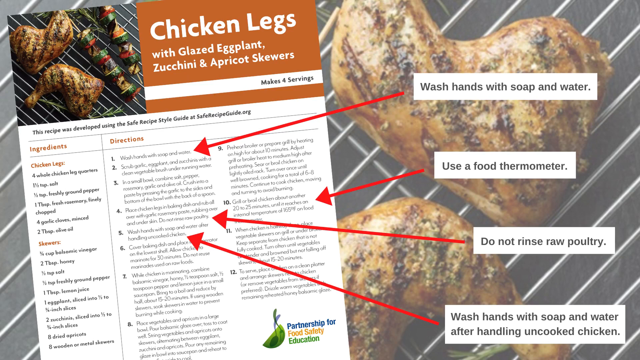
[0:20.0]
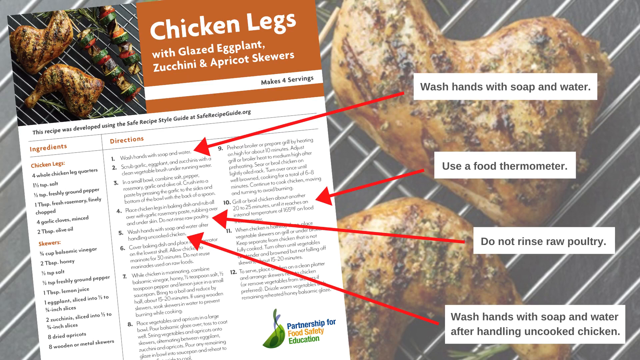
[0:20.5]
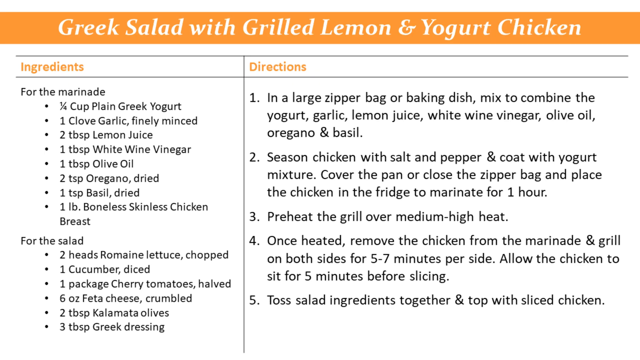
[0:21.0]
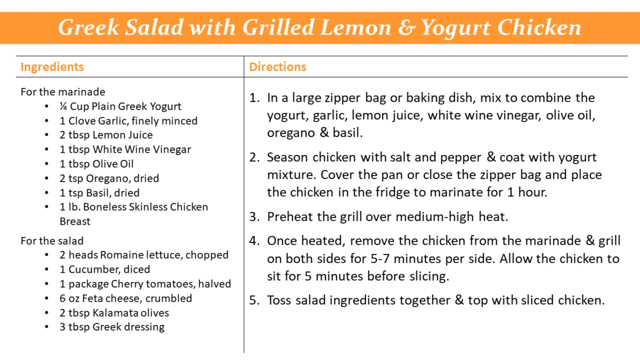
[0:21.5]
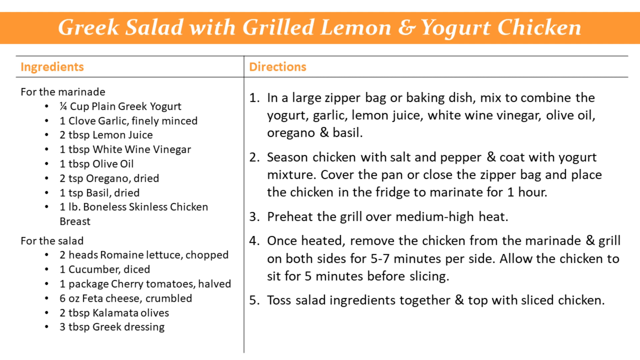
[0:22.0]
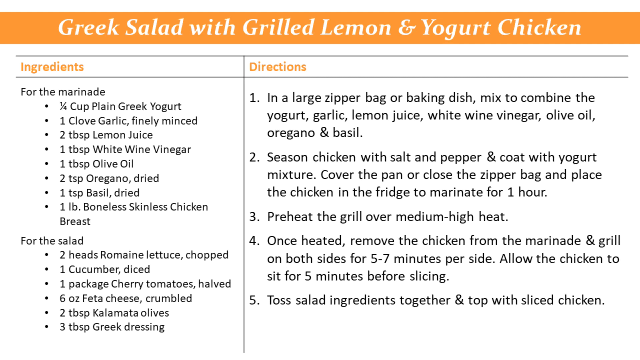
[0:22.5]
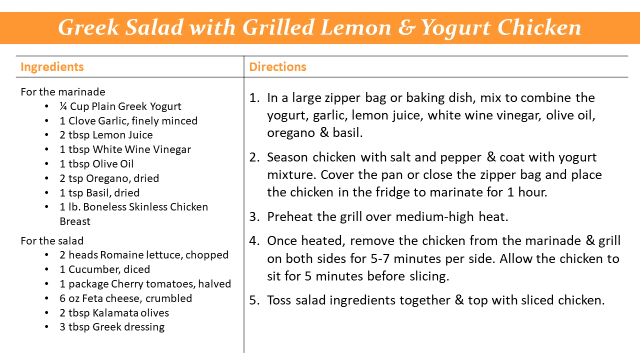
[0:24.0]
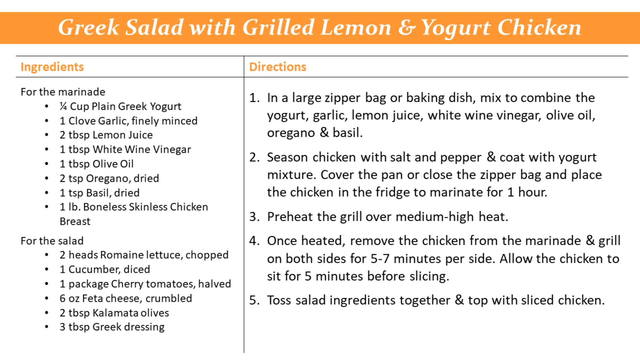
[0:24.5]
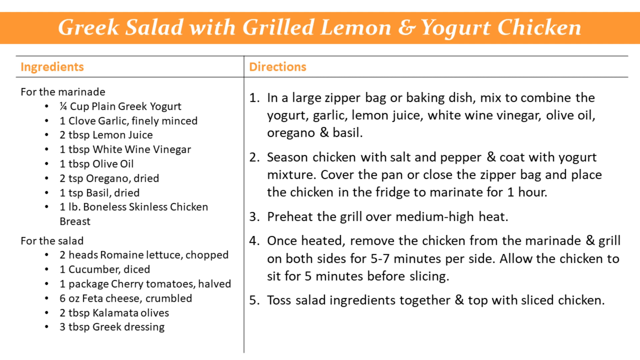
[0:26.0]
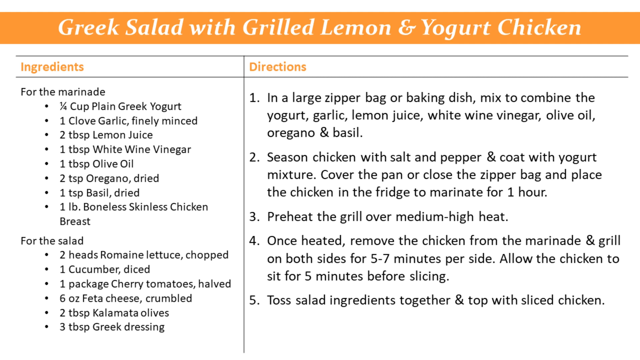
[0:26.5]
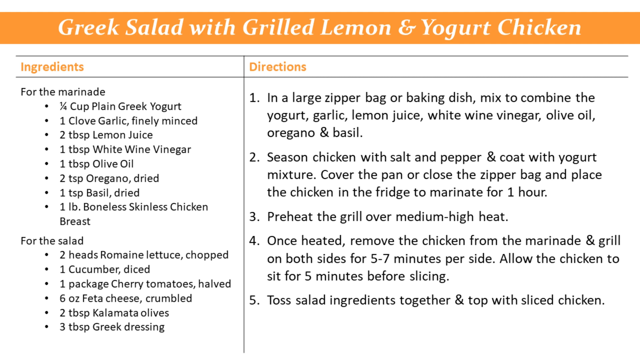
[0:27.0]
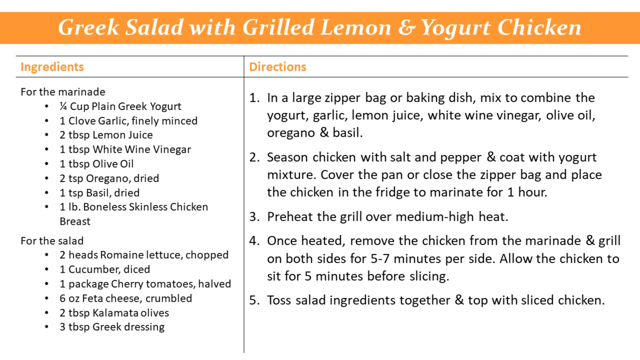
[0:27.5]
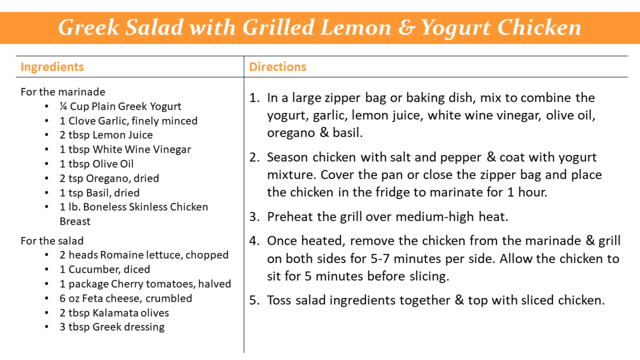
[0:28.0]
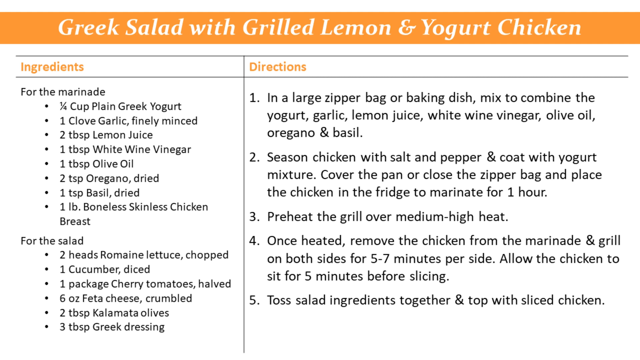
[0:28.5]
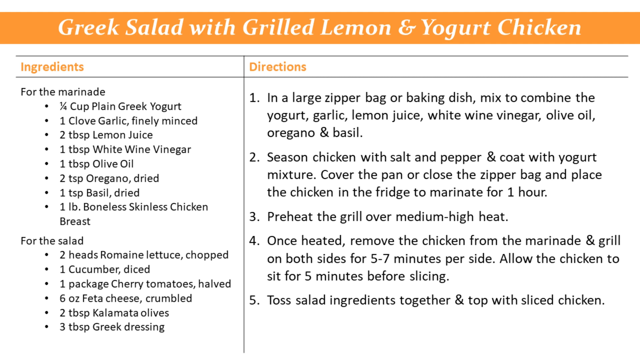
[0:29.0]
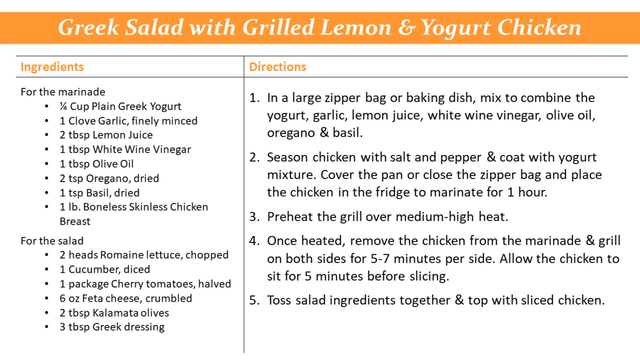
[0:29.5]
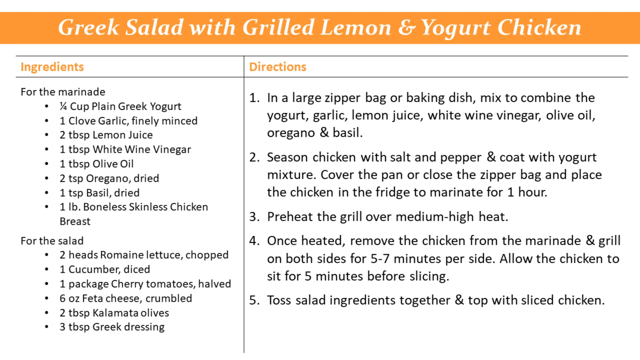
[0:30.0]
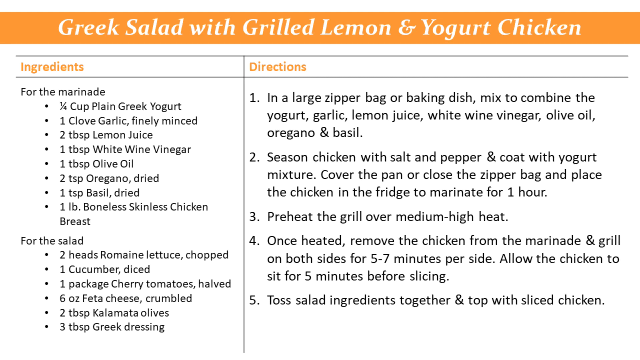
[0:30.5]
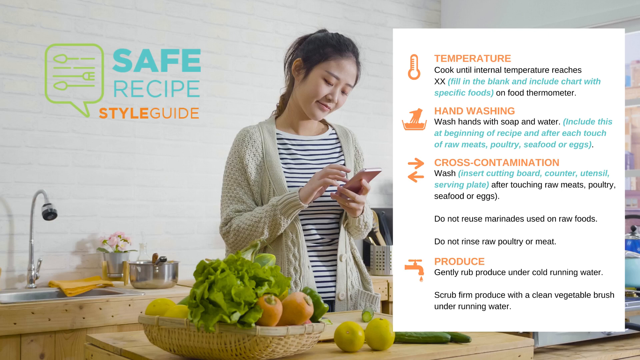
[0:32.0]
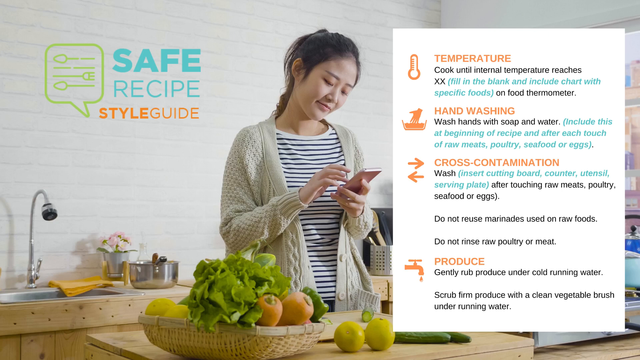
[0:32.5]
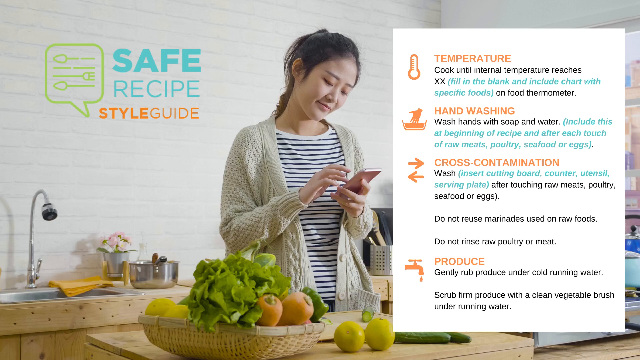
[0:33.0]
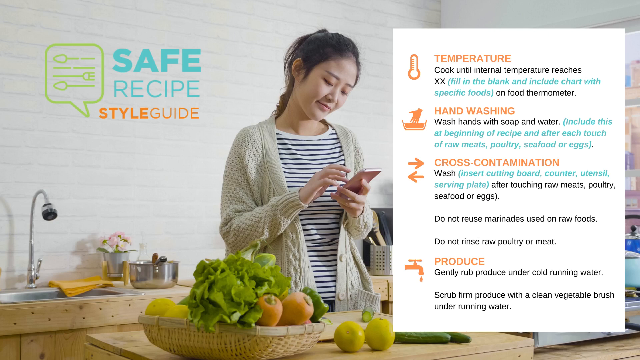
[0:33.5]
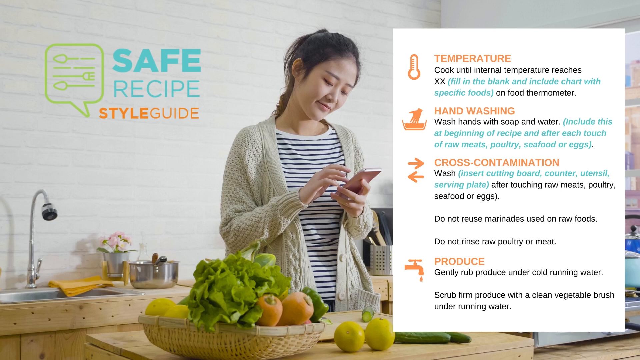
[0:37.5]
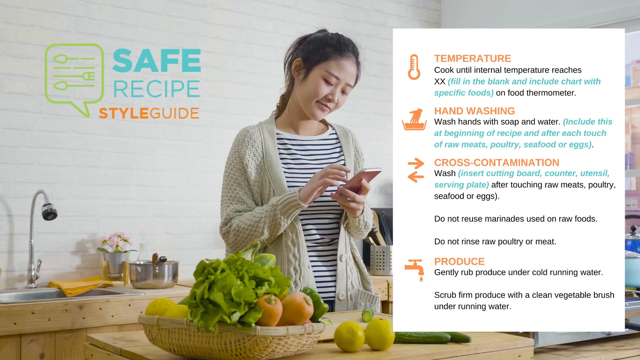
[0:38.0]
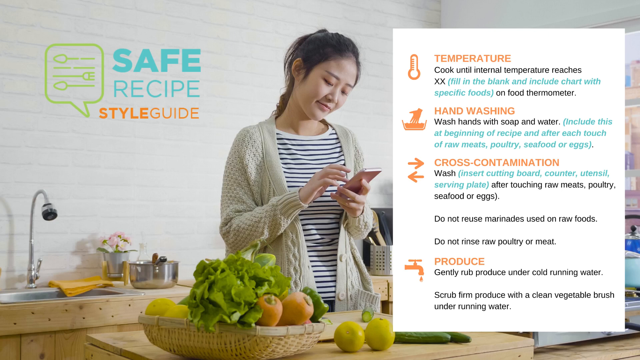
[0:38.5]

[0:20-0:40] Text about Greek salad and grilled lemon and yogurt chicken appears. A young lady checks something on her phone, apparently wanting to make sure of what she is going to cook.